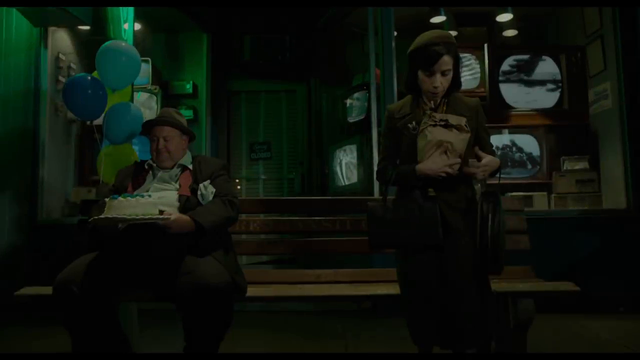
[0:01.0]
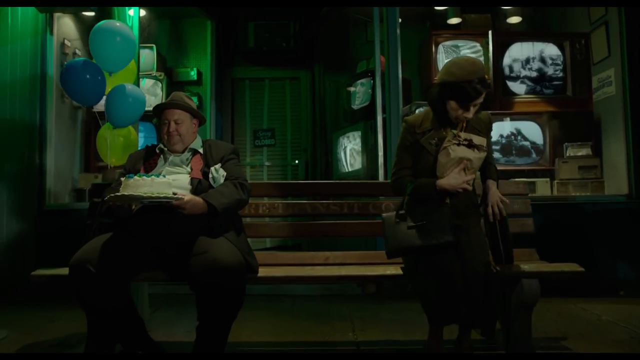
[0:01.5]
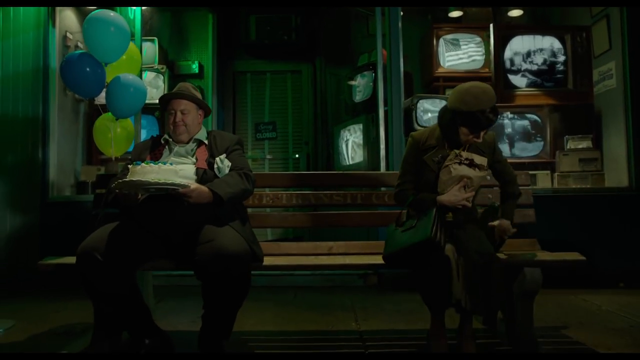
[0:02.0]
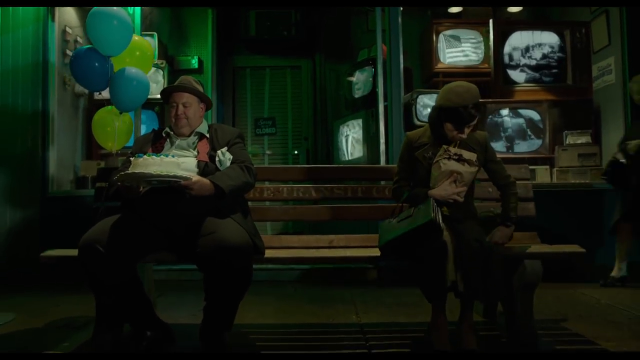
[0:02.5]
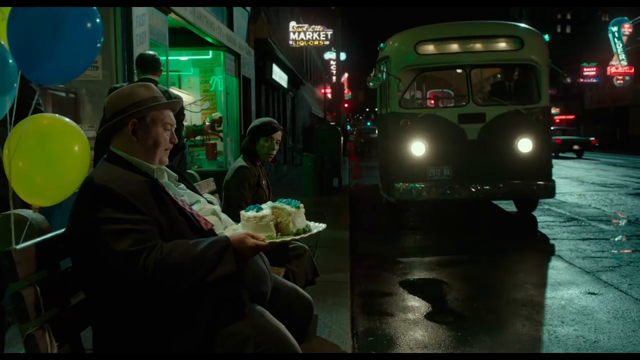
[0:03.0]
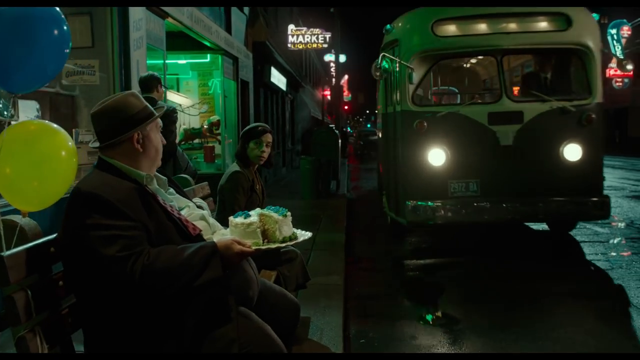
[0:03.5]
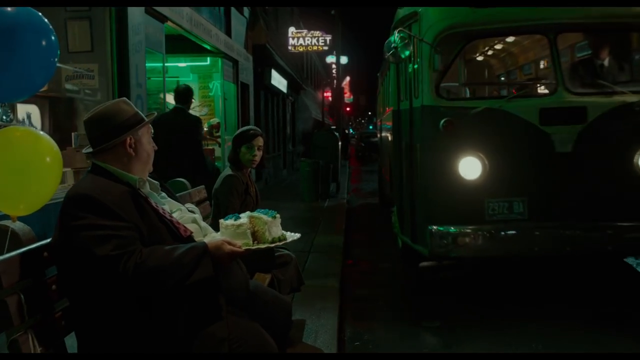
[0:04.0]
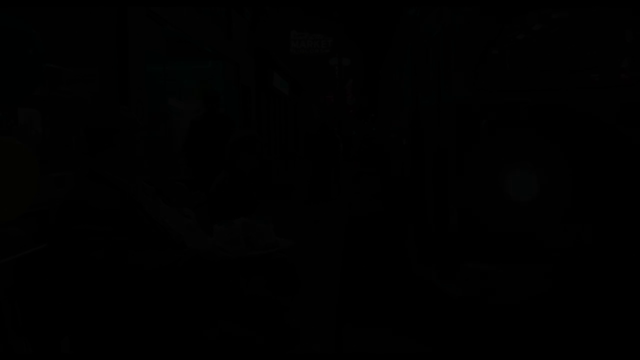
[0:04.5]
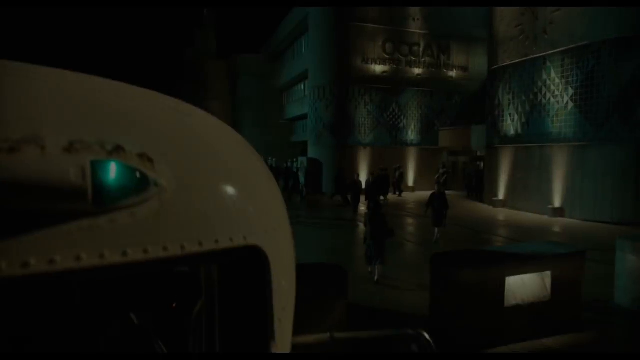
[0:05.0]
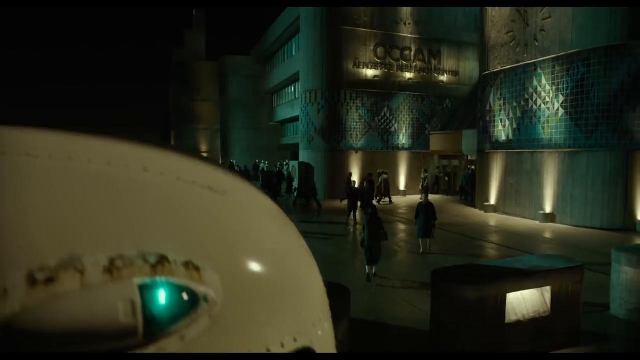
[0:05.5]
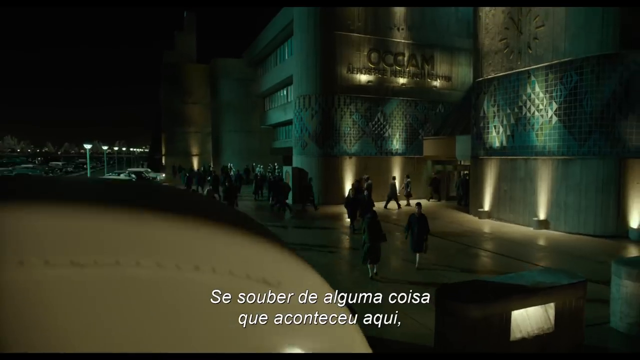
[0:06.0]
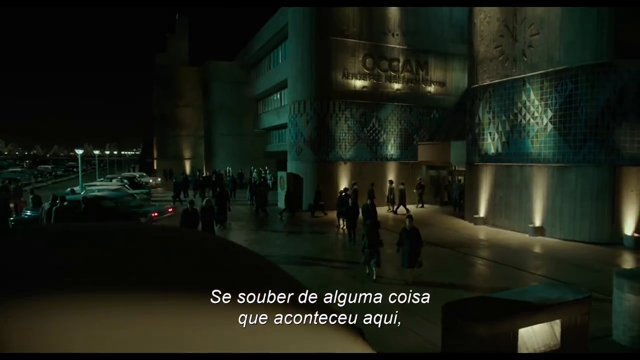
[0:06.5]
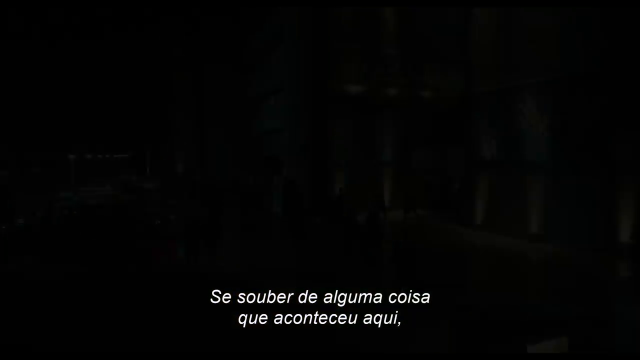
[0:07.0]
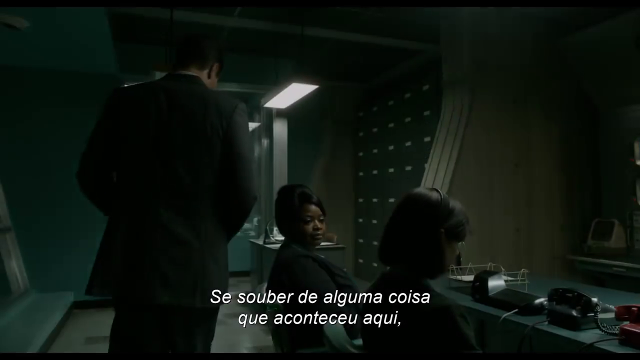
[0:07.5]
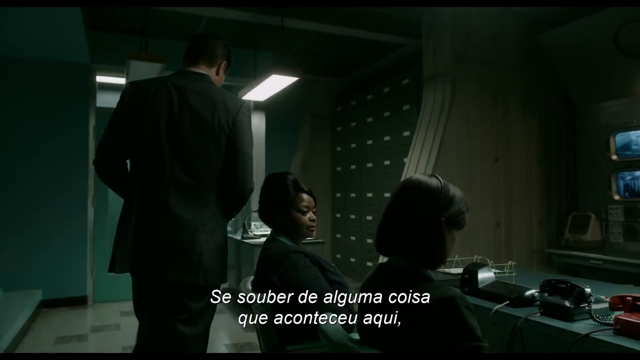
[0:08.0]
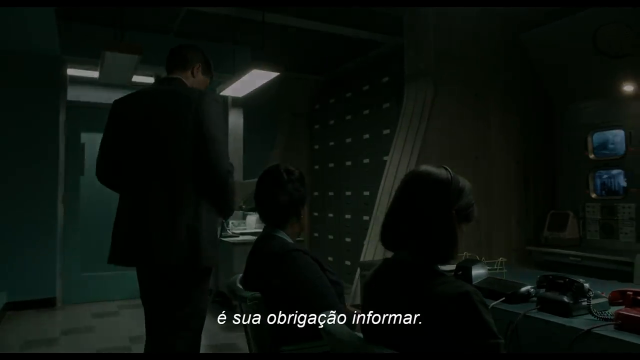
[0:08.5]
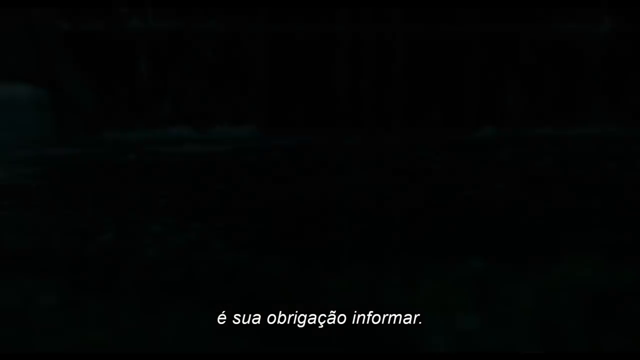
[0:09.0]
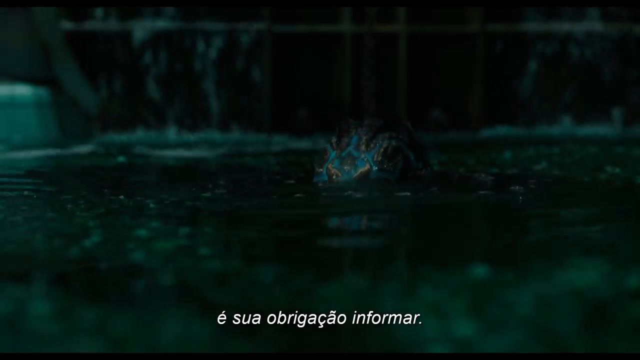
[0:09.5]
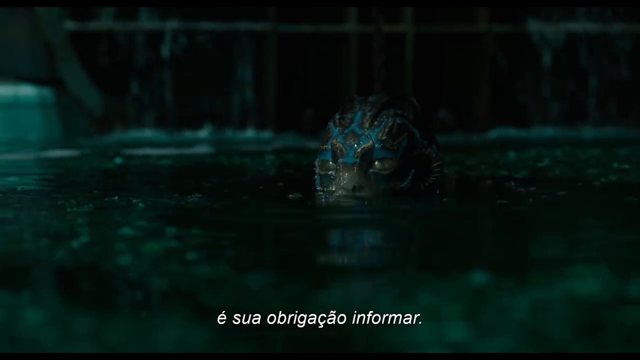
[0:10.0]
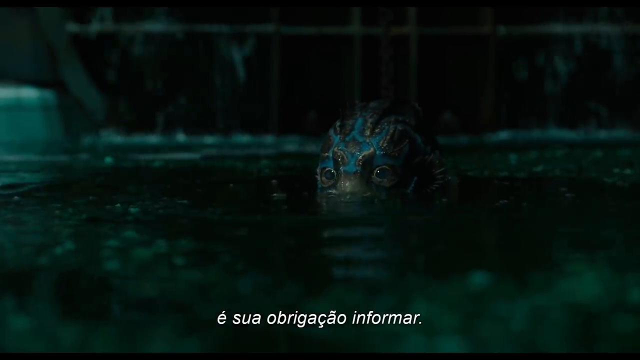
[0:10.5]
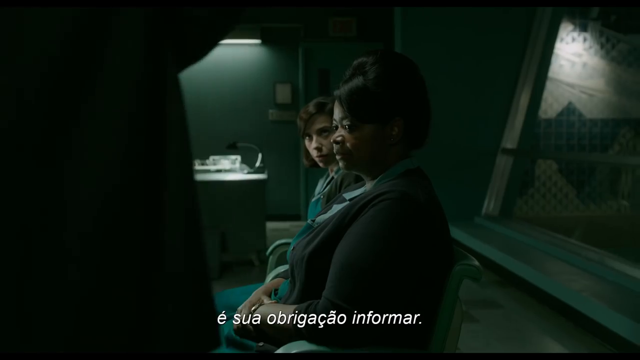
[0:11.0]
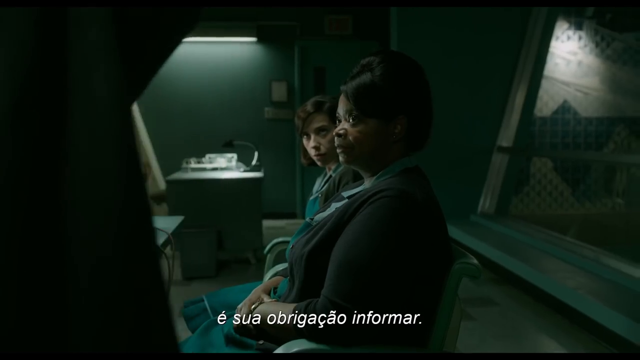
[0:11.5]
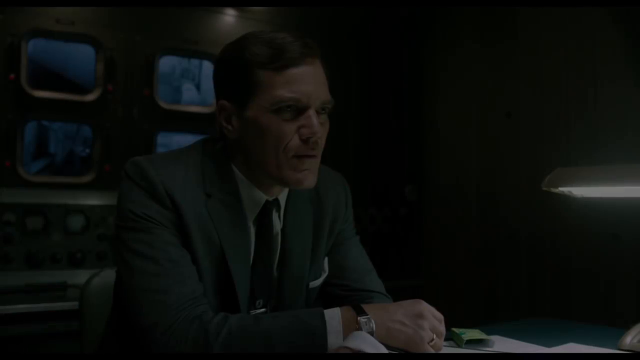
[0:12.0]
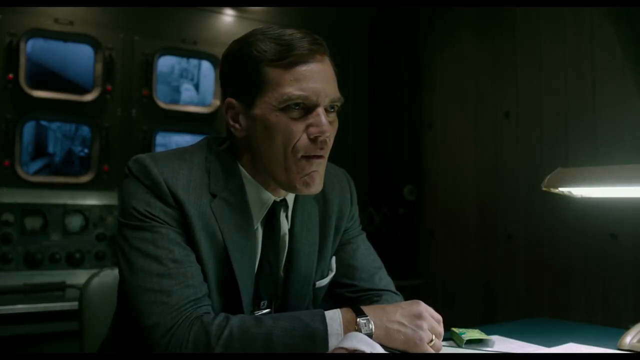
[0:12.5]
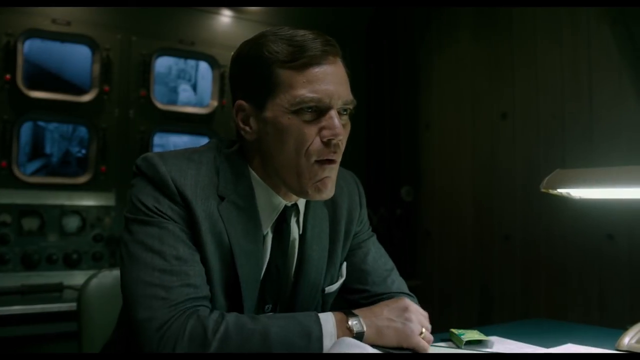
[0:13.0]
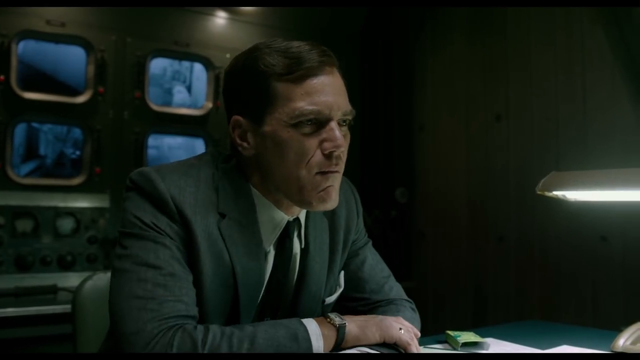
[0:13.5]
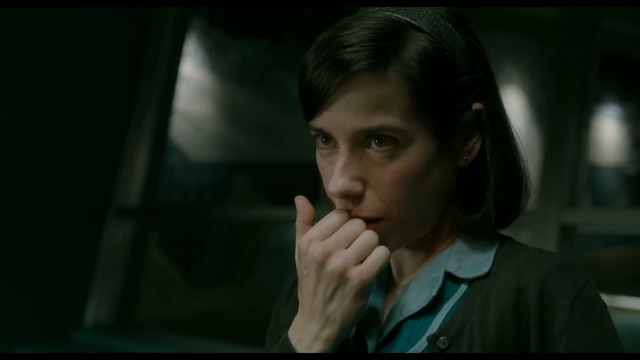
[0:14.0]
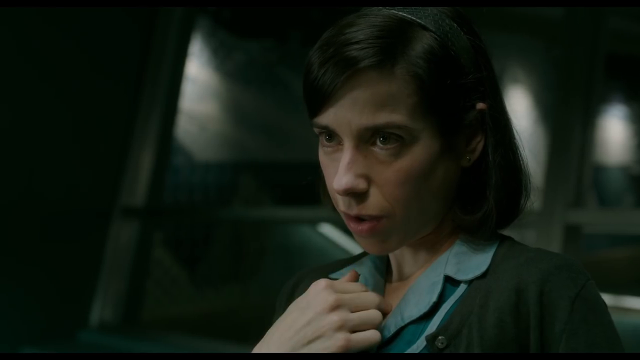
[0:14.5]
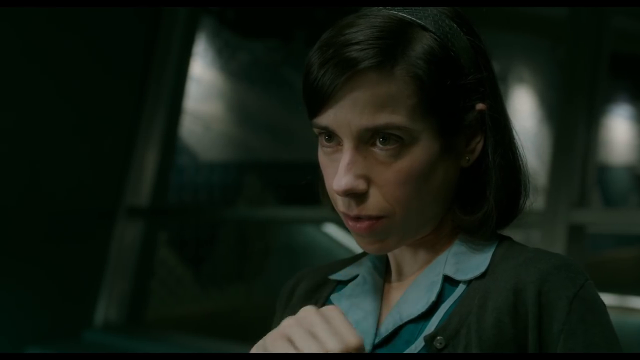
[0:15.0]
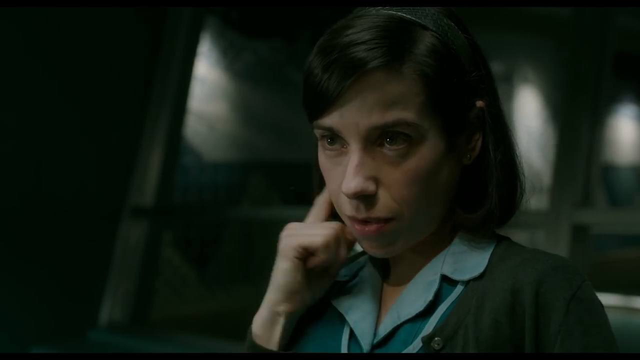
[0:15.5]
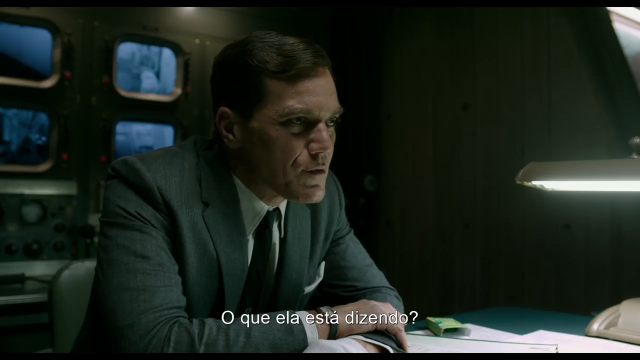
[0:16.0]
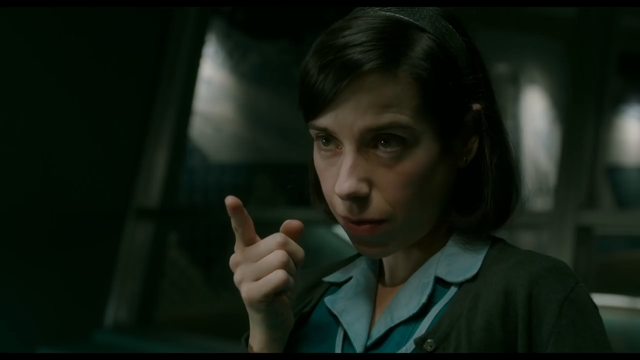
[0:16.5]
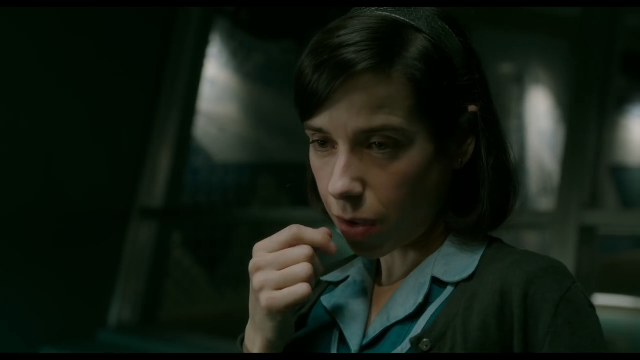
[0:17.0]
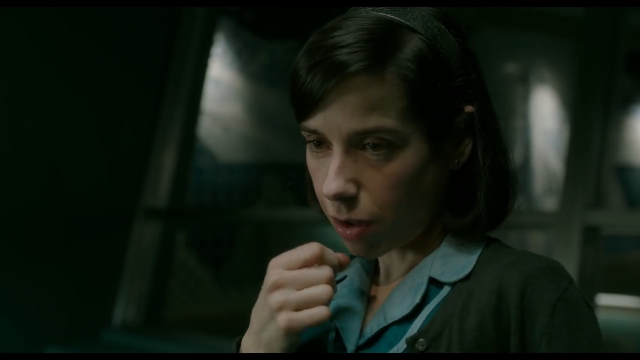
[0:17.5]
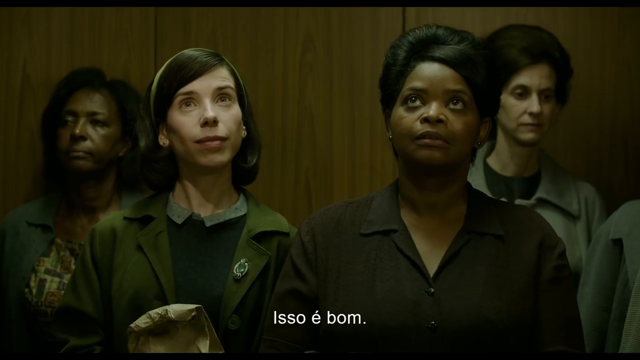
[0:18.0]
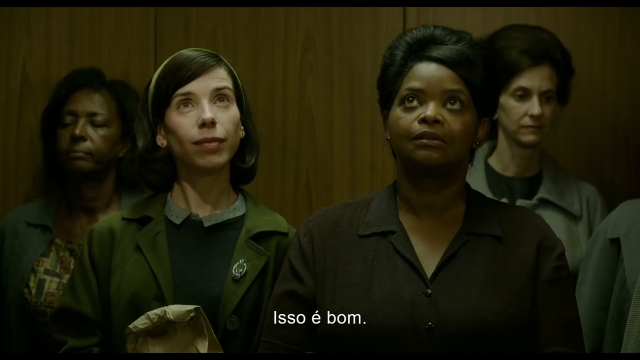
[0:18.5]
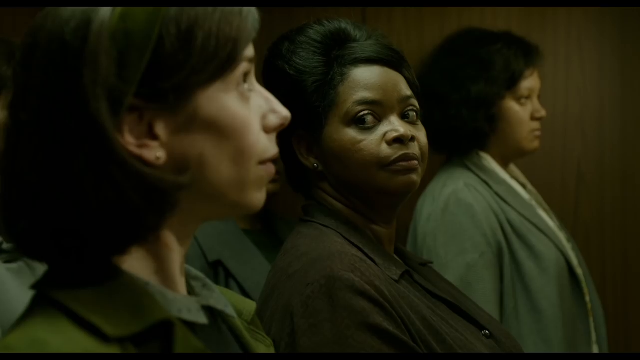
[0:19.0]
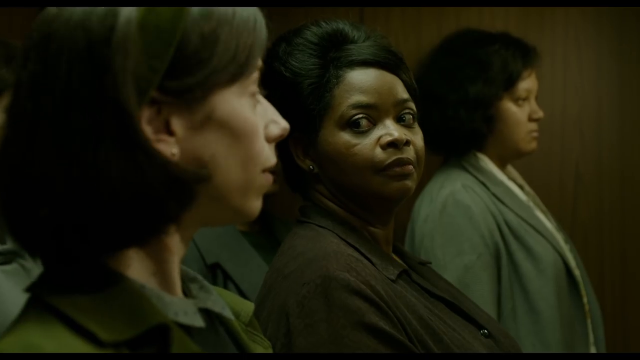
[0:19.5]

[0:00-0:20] Two people sit outside a store that has TVs in its display windows, one on the left side of the screen and one on the right. The man on the left sits holding a white cake. He wears a fedora-looking hat, a brownish or dark-colored jacket, suit or blazer with a white button-up shirt underneath, and dark pants, and he has a newspaper or some other kind of paper under his left arm, against his side. Balloons are visible in the window behind him, in the store in front of some TVs; the visible TVs look black and white. The woman on the right holds a paper bag in her right hand against her chest. She wears old-style-looking clothing, including a kind of flat French-style hat that lays over her head, and a dark-colored hat and jacket or coat. She has a purse over her right arm near her elbow and sits across from the man. The scene changes to a side view of the pair, with the sidewalk extending into the distance behind them, and a bus pulls up.